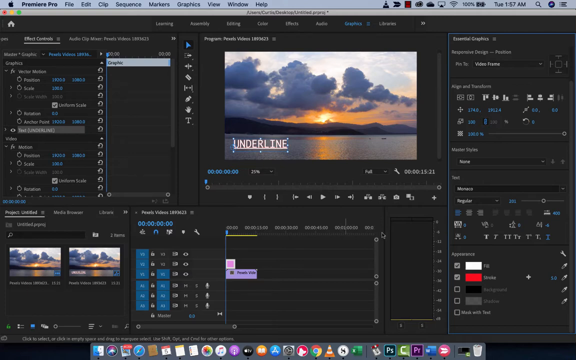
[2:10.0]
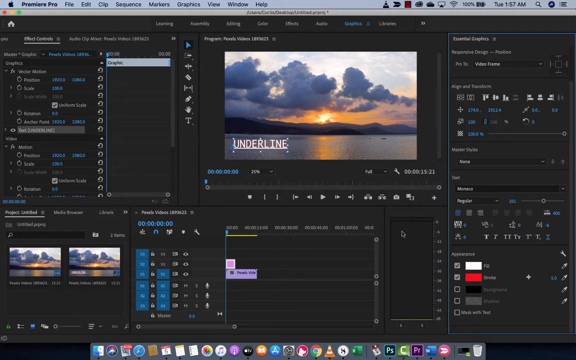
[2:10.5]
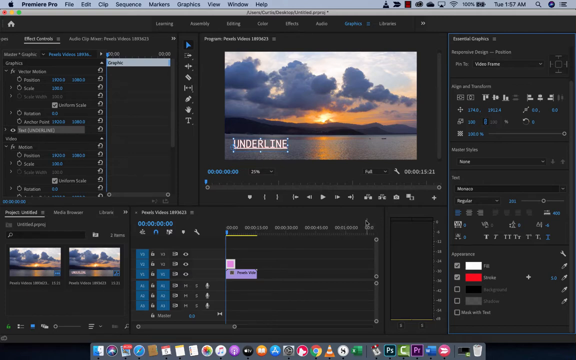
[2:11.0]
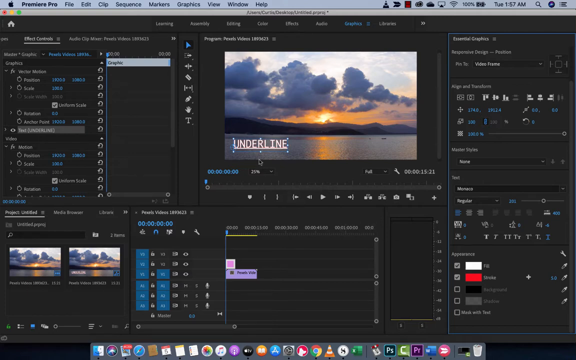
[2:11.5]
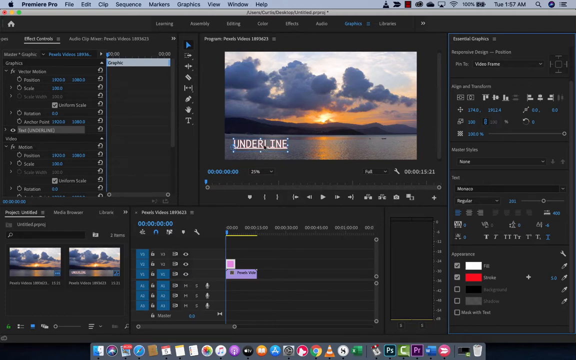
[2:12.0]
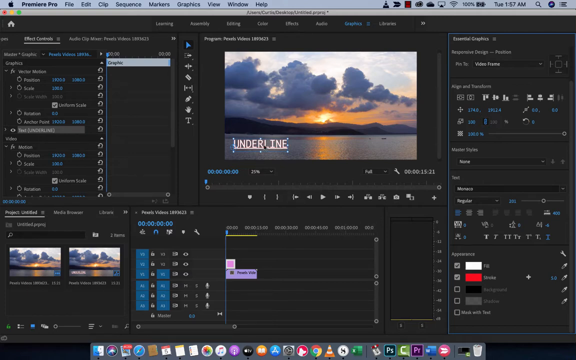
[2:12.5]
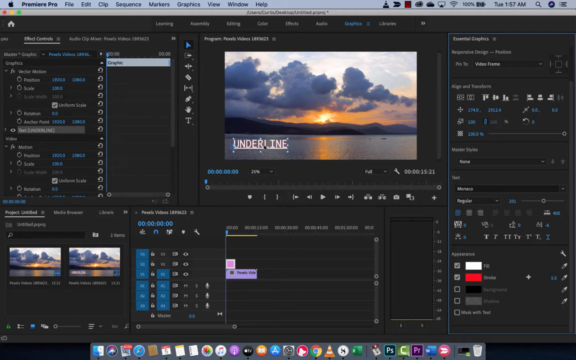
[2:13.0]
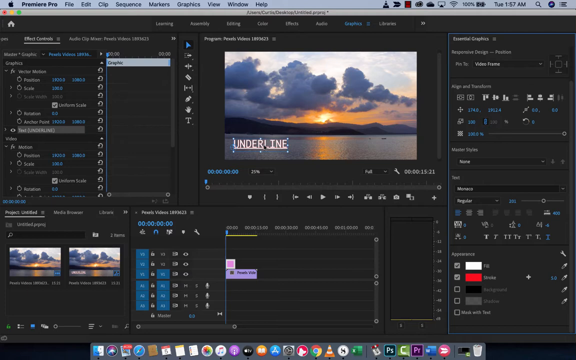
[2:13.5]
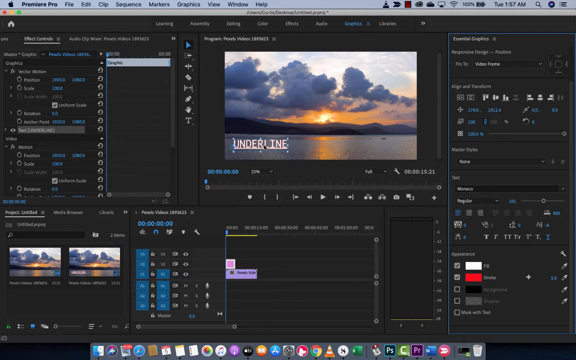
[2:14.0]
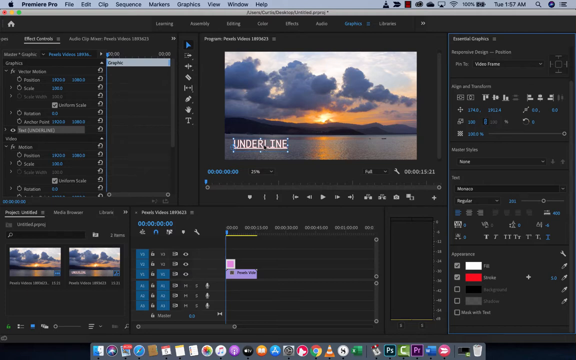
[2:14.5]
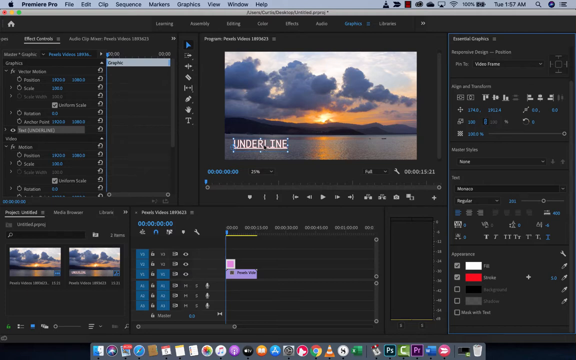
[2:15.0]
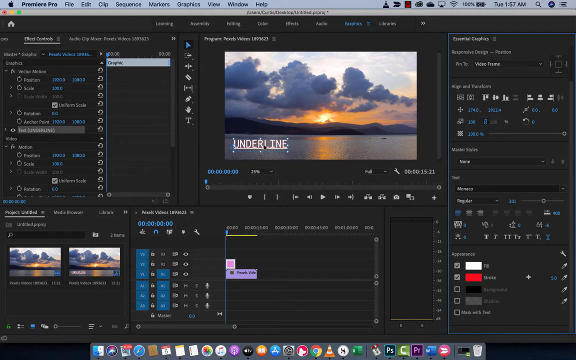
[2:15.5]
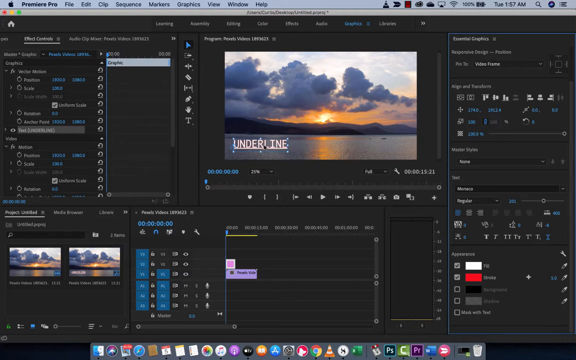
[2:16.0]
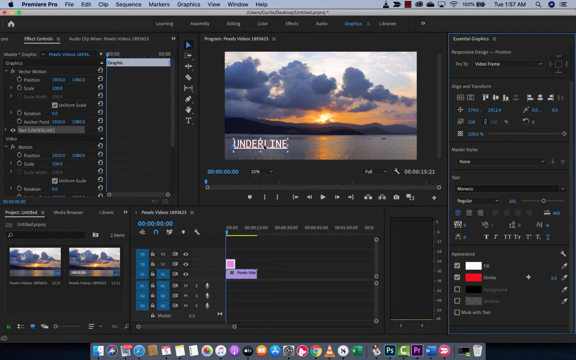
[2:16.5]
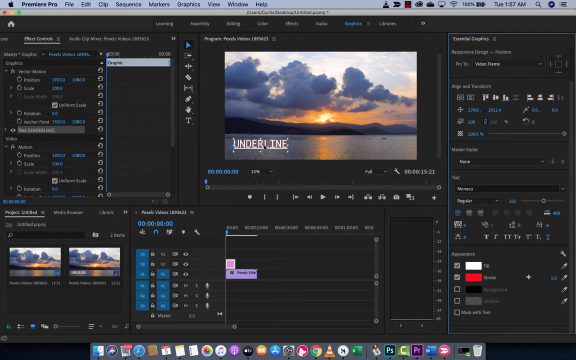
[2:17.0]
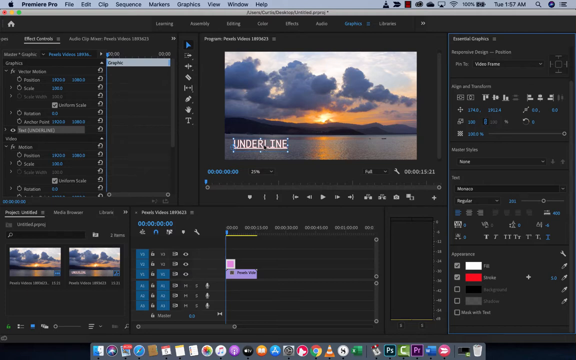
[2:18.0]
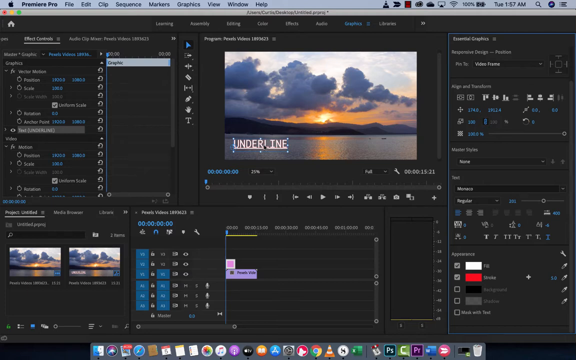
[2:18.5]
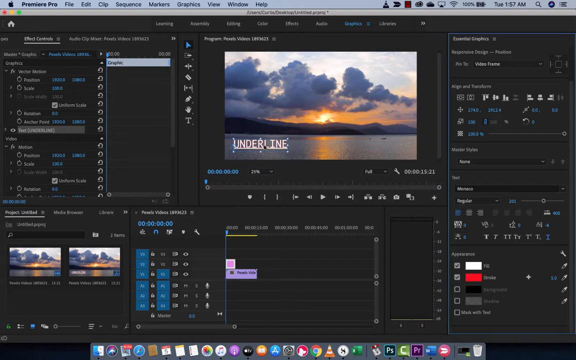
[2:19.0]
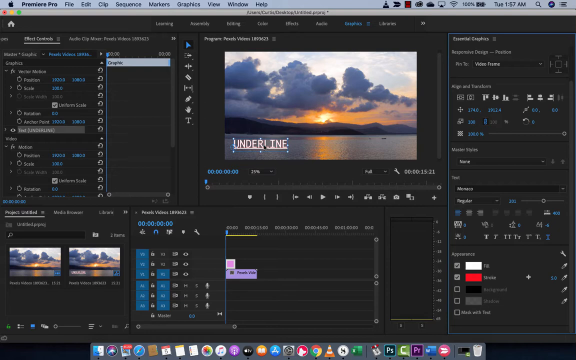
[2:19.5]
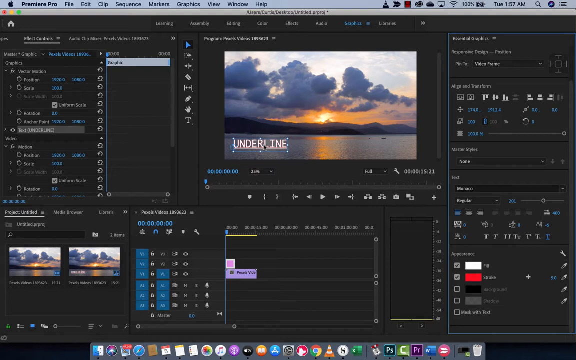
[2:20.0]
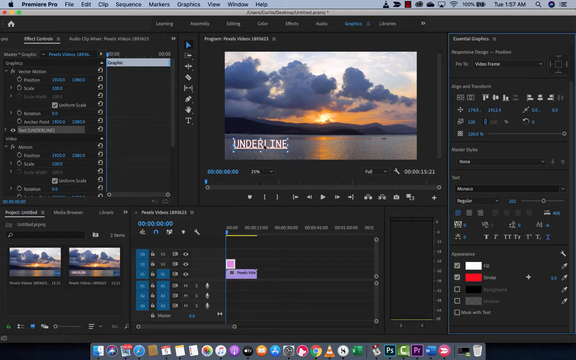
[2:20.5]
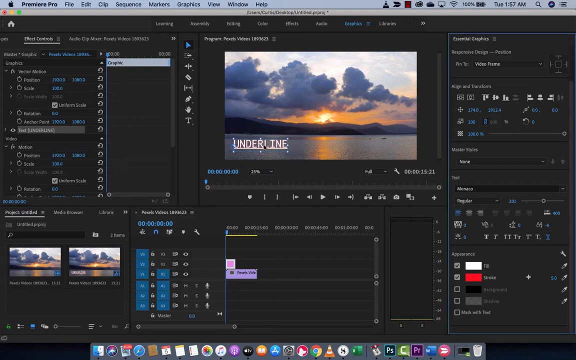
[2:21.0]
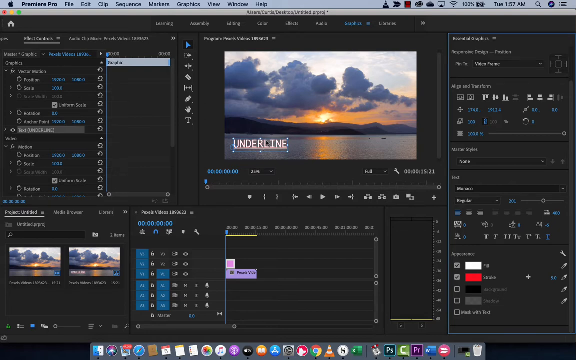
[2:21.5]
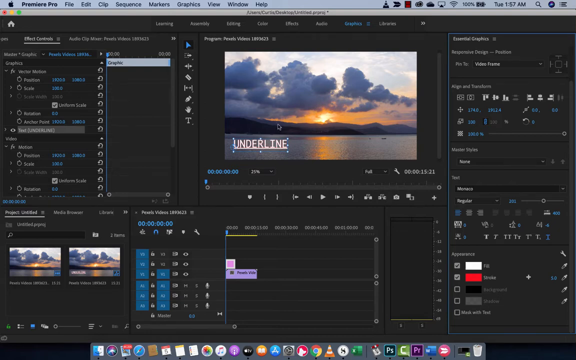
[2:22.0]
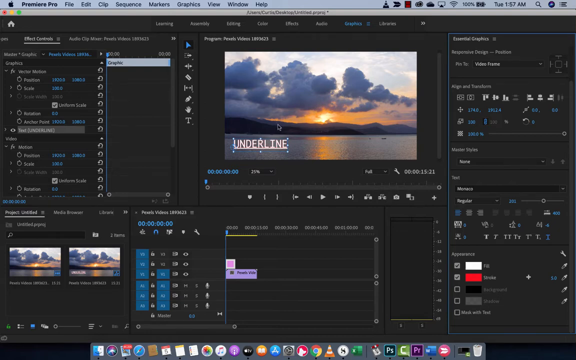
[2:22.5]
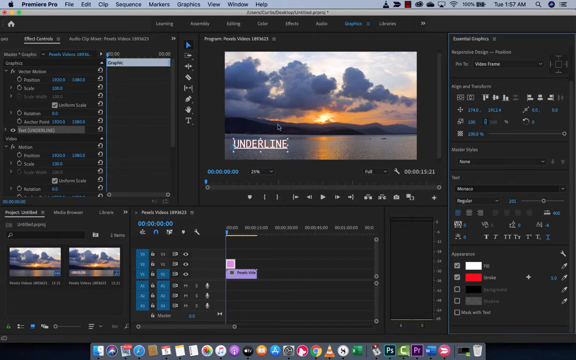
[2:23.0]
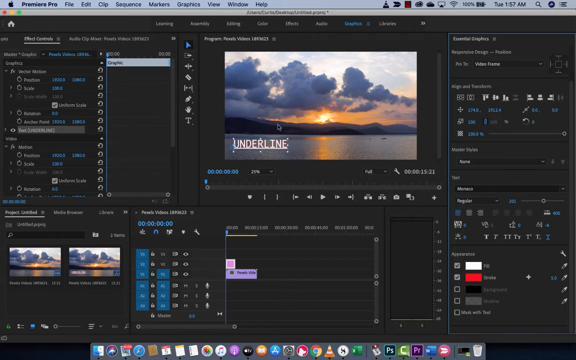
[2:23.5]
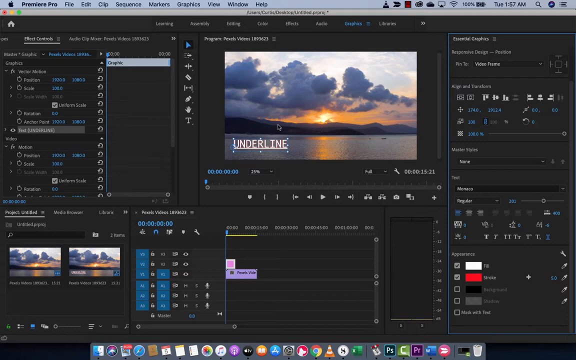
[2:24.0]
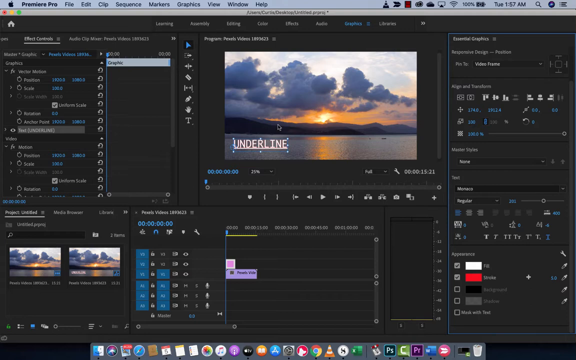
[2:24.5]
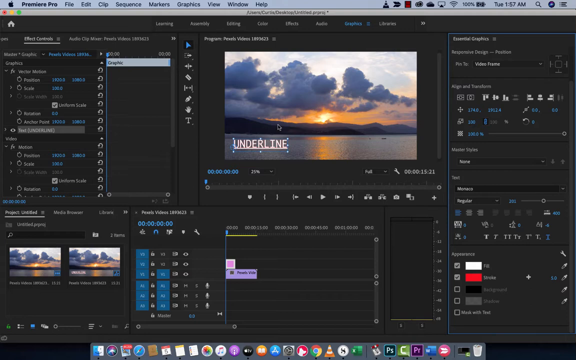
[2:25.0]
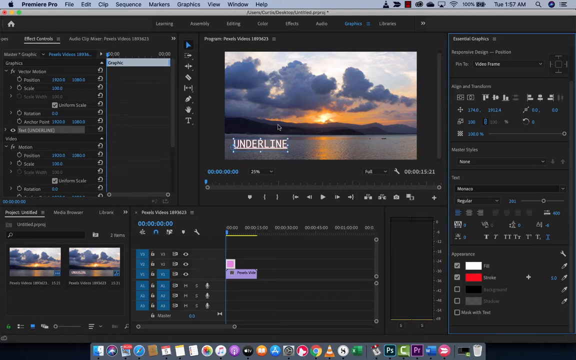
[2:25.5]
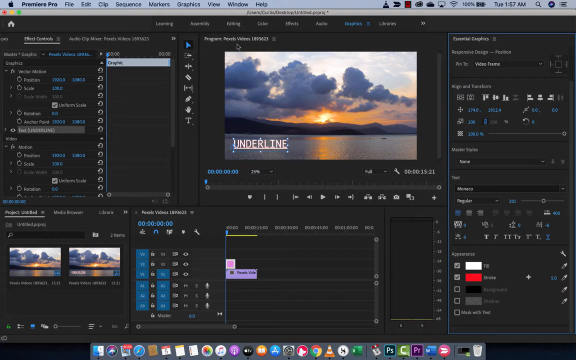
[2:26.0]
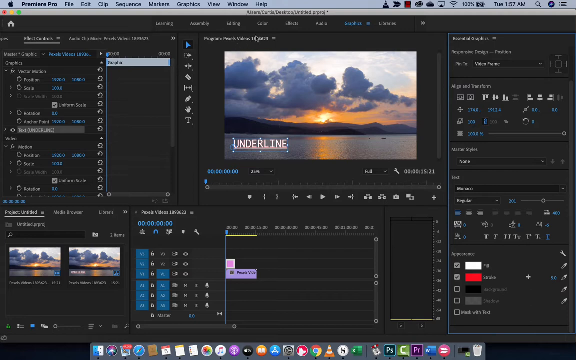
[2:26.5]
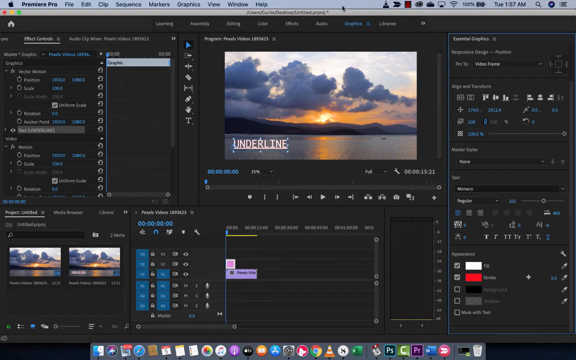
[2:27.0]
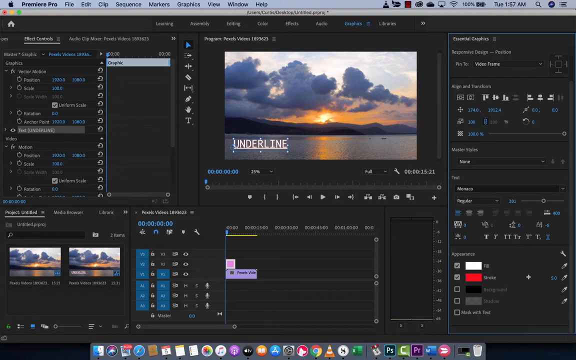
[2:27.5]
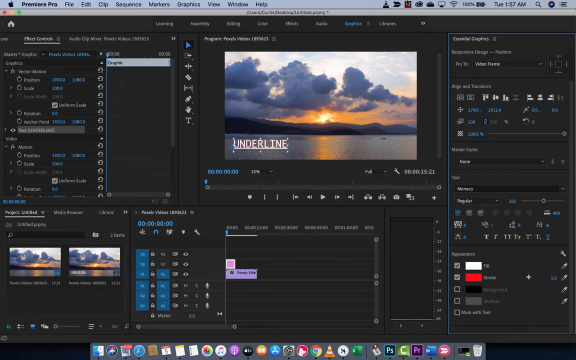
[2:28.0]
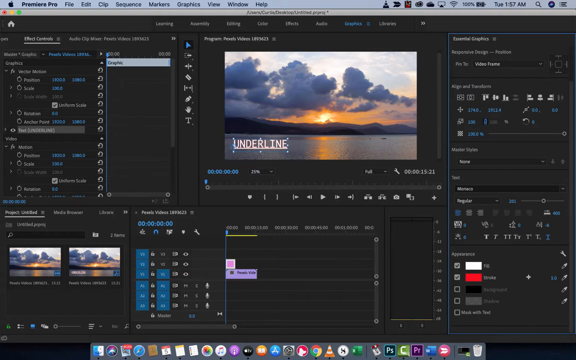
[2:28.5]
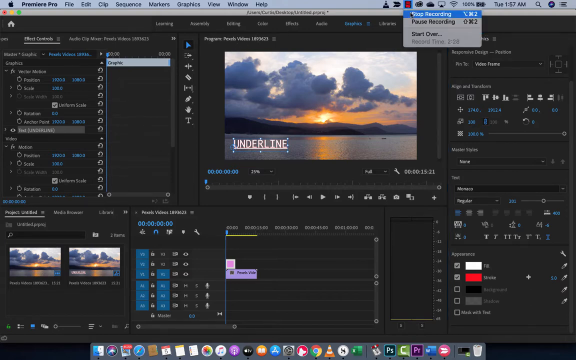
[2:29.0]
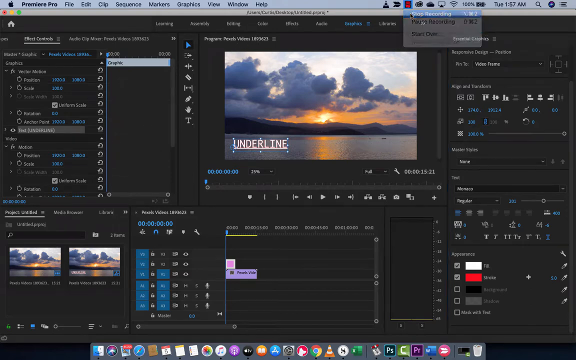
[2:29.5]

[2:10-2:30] A program labeled "Premiere Pro" at the top left shows different tools, along with a picture of a sunset with clouds and a body of water, and "underline" in the bottom left of the picture. The mouse moves around just below the center of the page, then goes over "underline" and stays there for a moment; the word is all in white. The cursor moves up slightly to the right over the mountains in the image and stays there before leaving the picture. It goes to the text just to the top left of that, then to the very top of the program, where it clicks a button that brings up an option saying "Stop Recording". It highlights "Stop Recording", which turns blue.